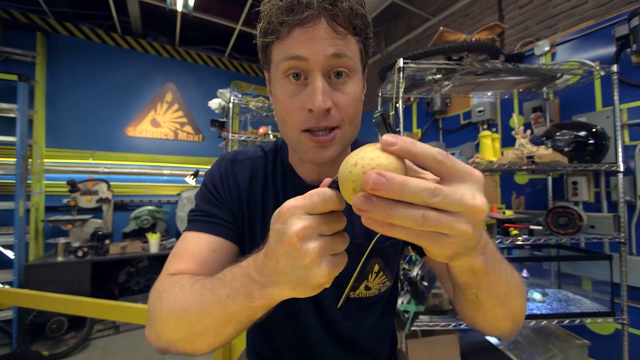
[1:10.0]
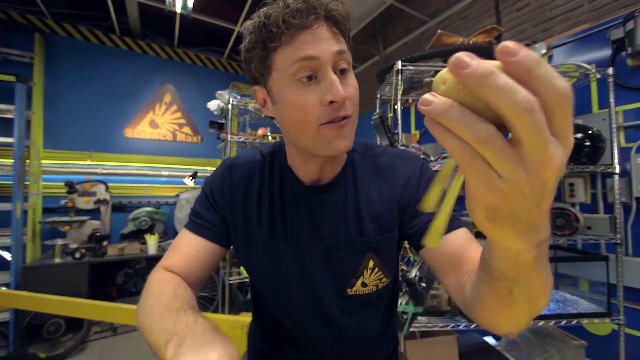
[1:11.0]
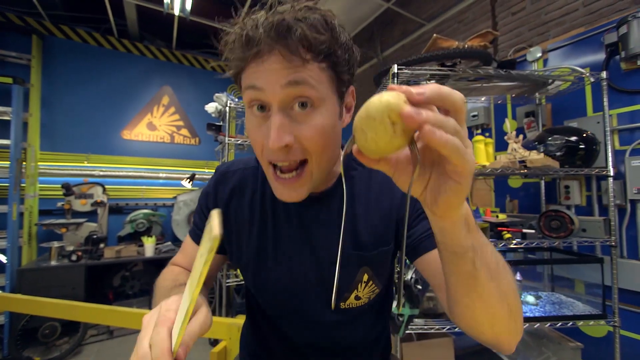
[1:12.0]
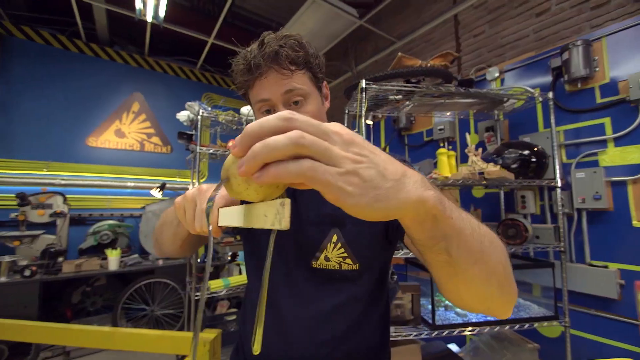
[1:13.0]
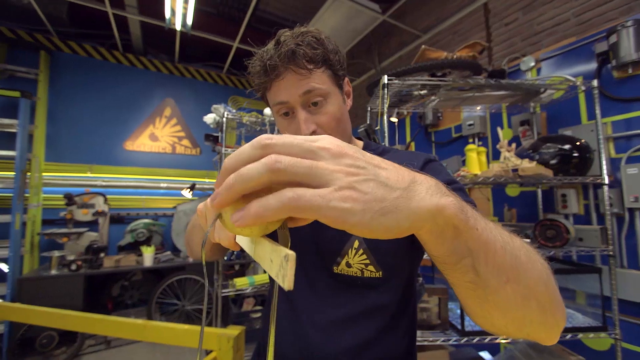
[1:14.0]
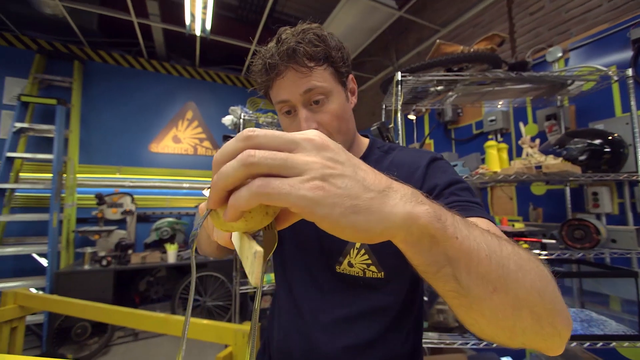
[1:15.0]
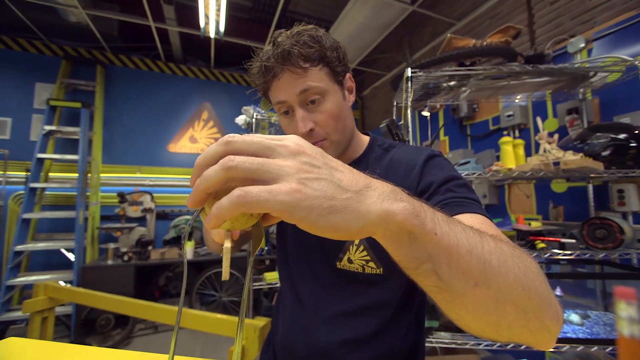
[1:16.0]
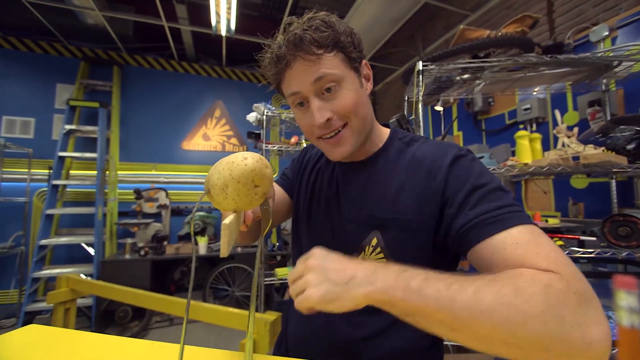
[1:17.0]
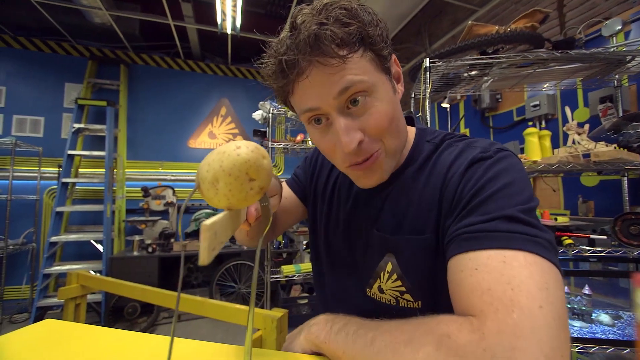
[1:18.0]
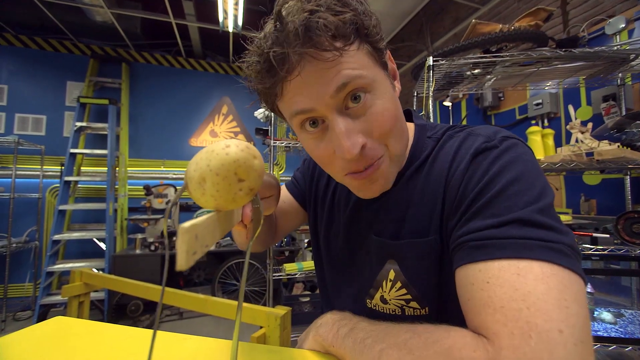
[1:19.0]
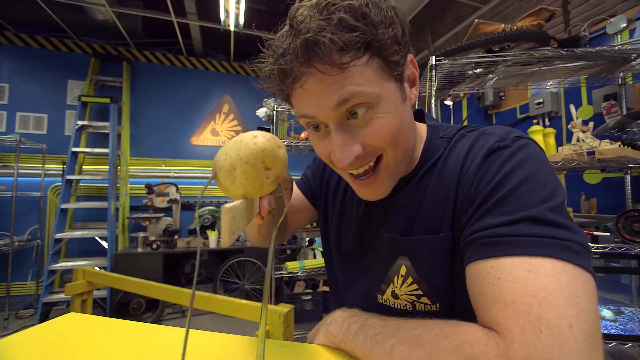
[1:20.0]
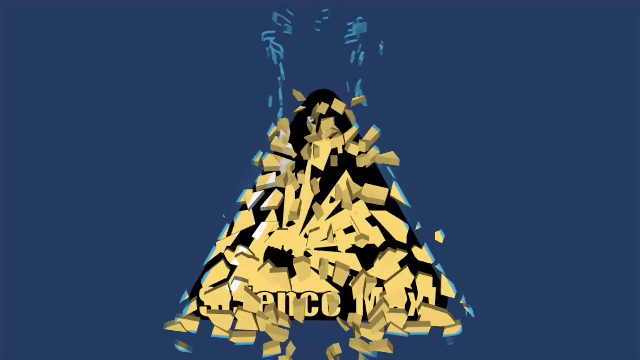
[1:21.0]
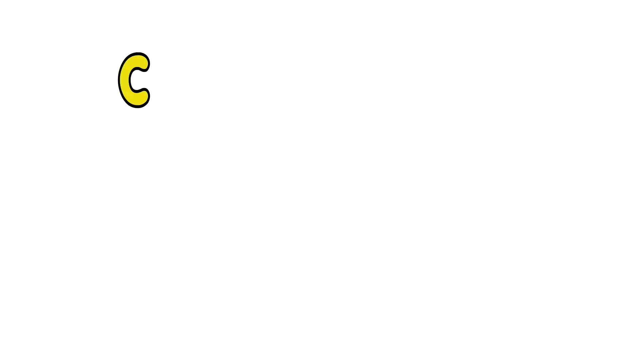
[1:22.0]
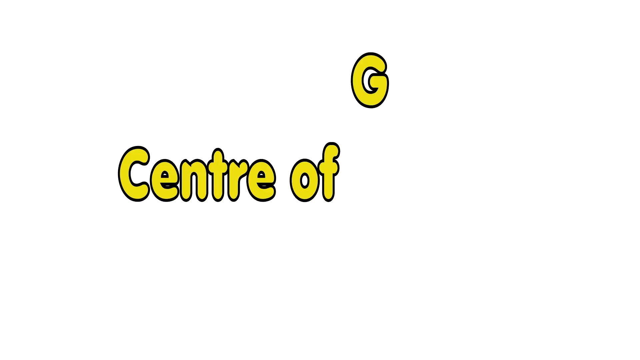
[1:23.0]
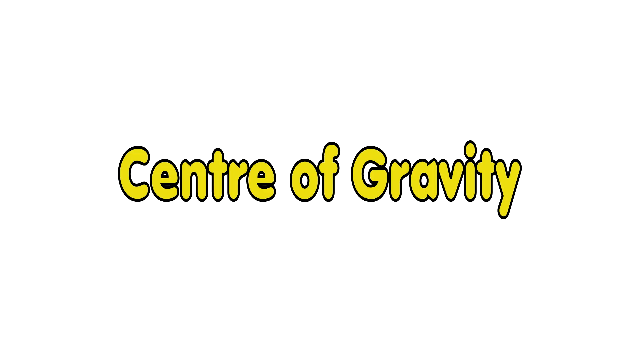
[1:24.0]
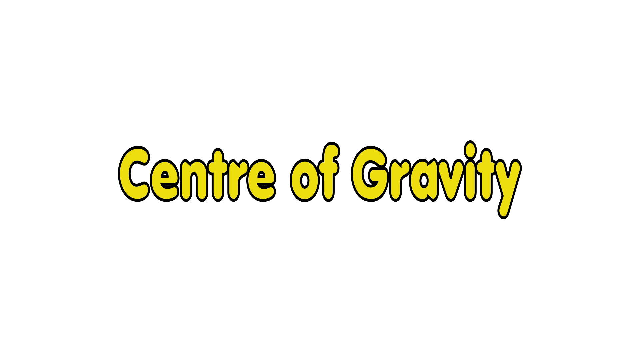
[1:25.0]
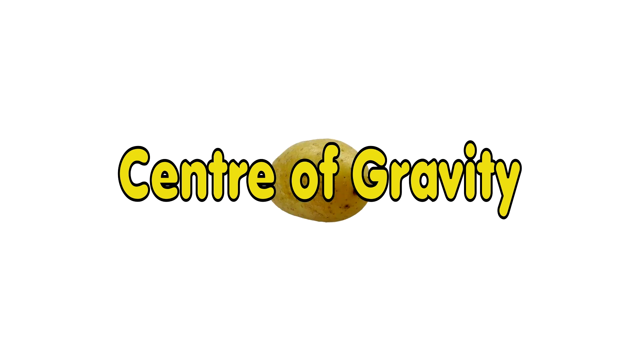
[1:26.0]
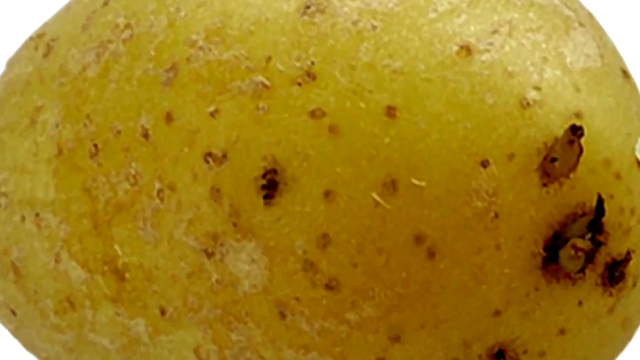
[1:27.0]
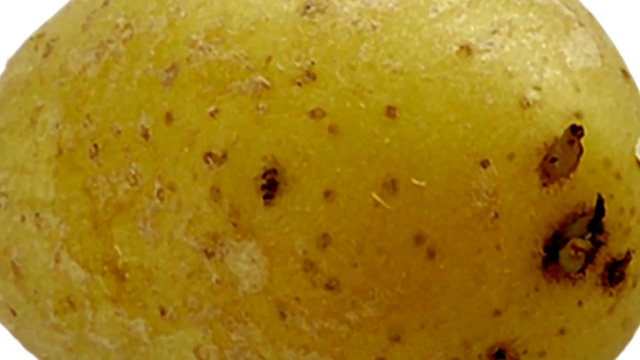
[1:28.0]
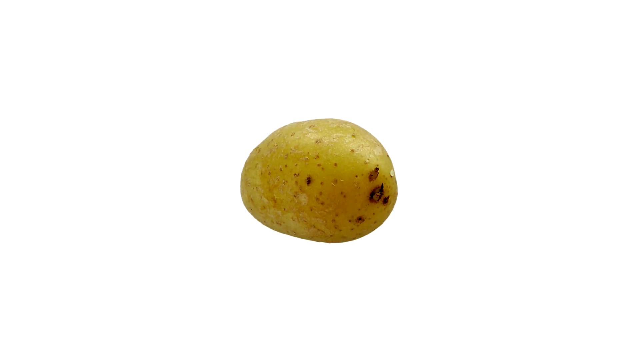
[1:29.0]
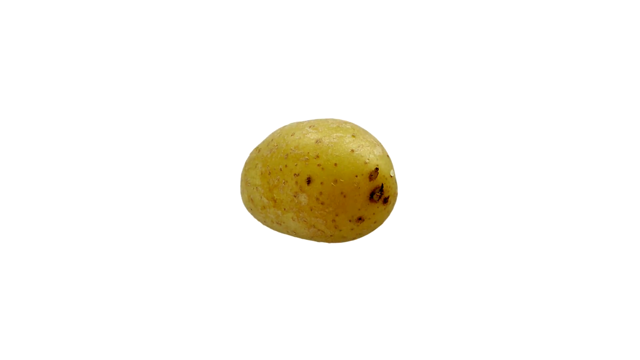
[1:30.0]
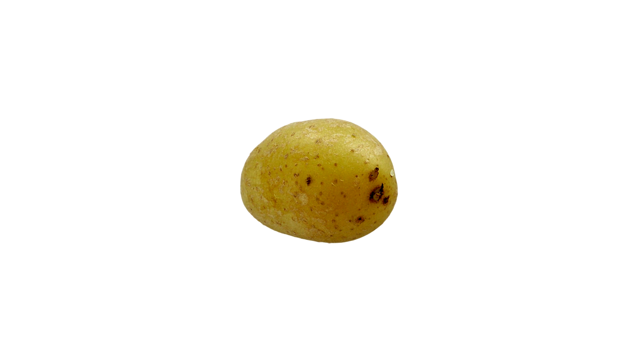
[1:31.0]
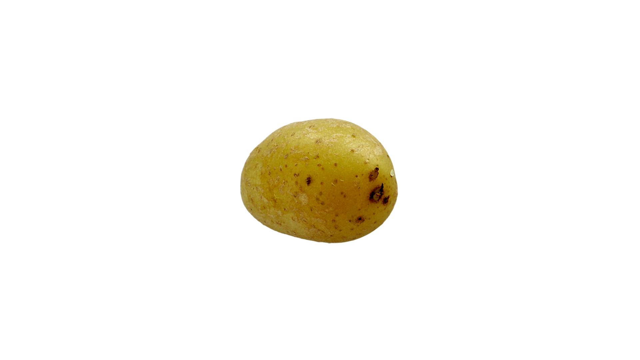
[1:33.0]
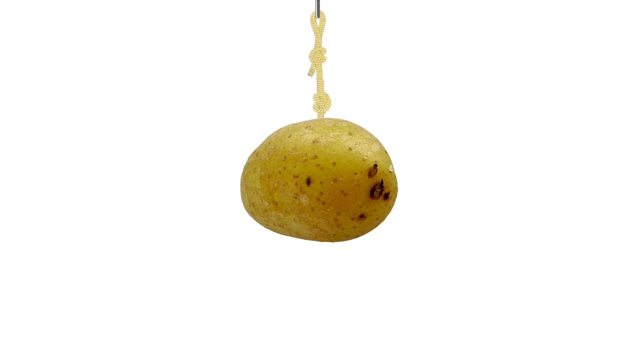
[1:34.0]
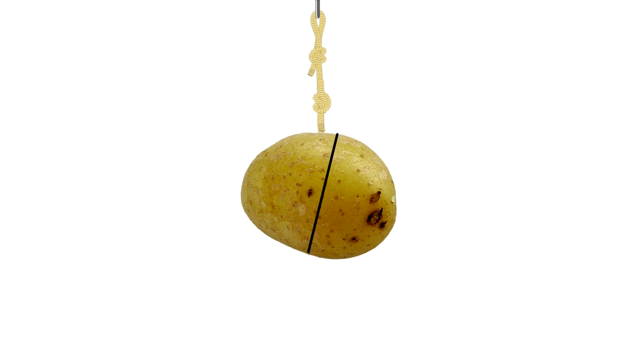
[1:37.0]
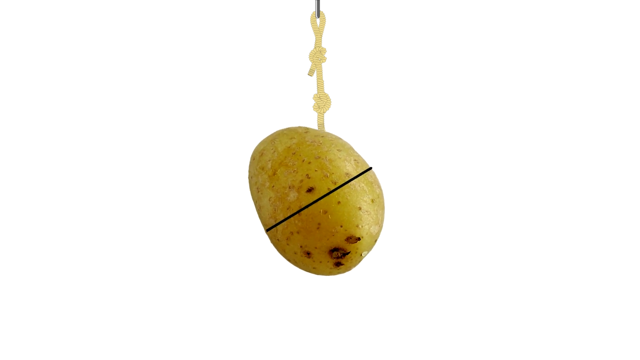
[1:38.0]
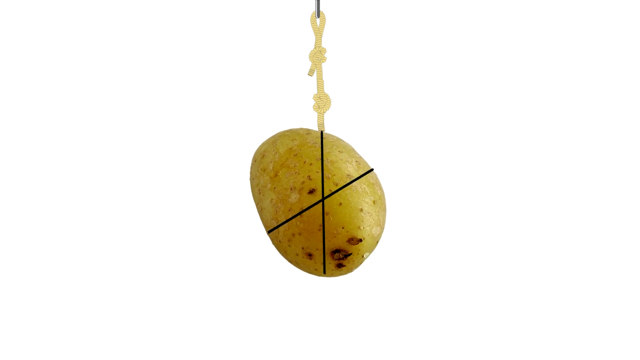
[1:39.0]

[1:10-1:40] In a lab, a man with brown hair and a dark blue shirt holds a potato in his left hand and presses a fork into its side with his right hand. He holds up the potato with the two forks pressed into it in his left hand and glances down at what he has created. He holds the potato and fork combination up for the camera while picking up the ruler in his right hand. He places the potato on the edge of the ruler and slowly rocks it back and forth, trying to balance it. He raises his left hand, and the potato sits on the ruler's edge. The man leans in toward the camera and smiles as he speaks, showing the potato balanced on the ruler's edge. The video then shows a beaker shattering, with the Science Max logo behind it against a blue background. Next comes a white background, and letters drop from the top of the frame into the middle to form a line of yellow text reading "Center of Gravity". An image of a potato appears in the center and expands to cover the whole frame, then recedes to the center. A rope and a hook appear above the potato, and the potato rocks back and forth, left and right. A black line appears in the middle of the potato. The potato rotates in place until it is upside down and a new black line goes through it. The potato rotates again, and another black line is put through it.